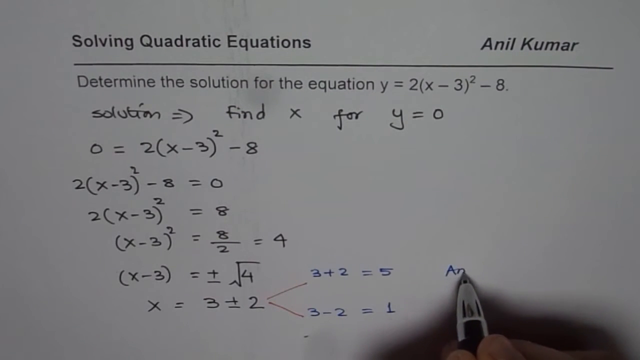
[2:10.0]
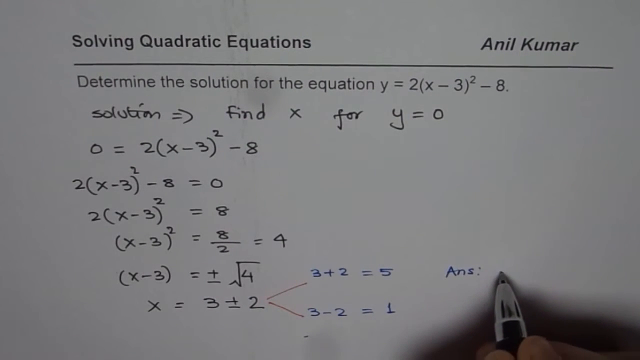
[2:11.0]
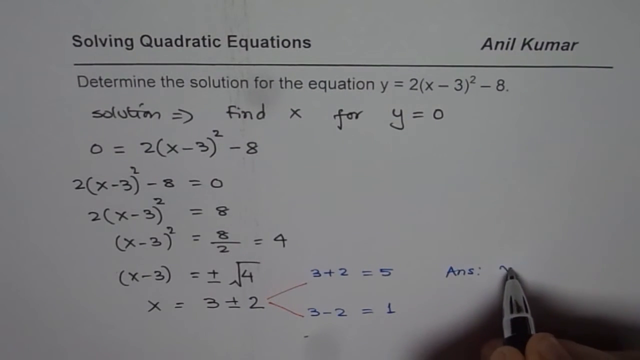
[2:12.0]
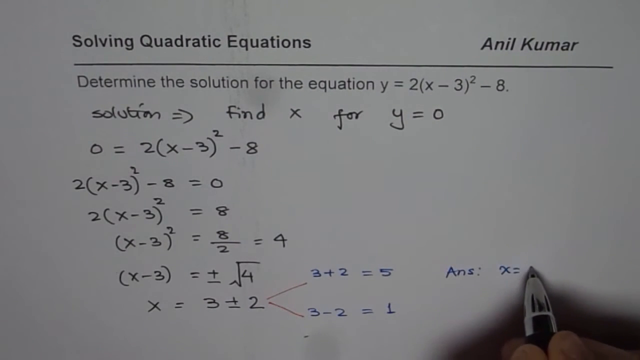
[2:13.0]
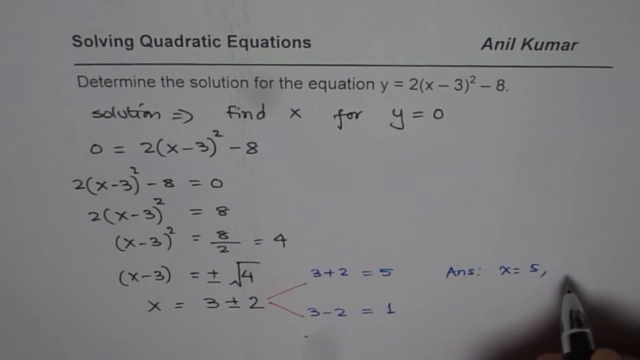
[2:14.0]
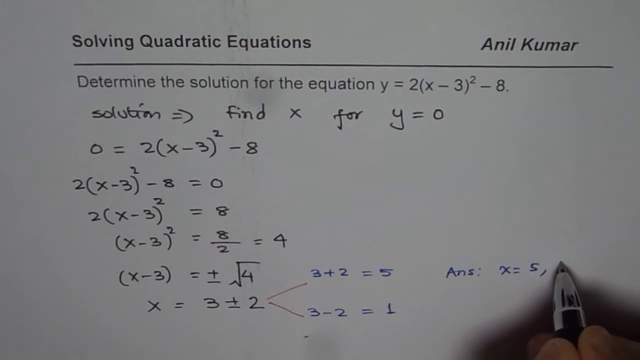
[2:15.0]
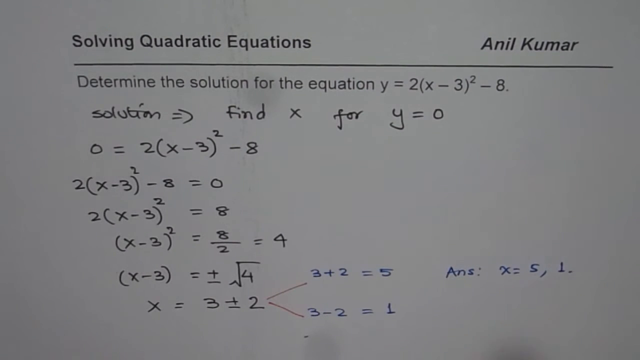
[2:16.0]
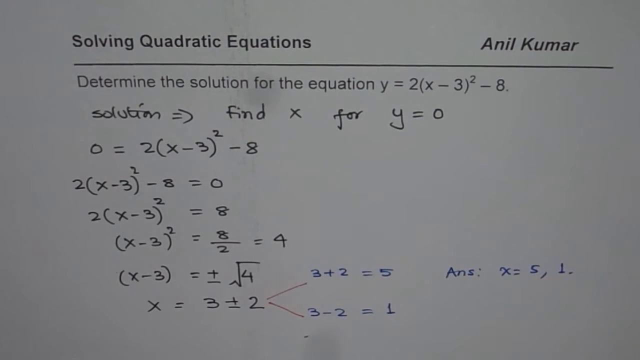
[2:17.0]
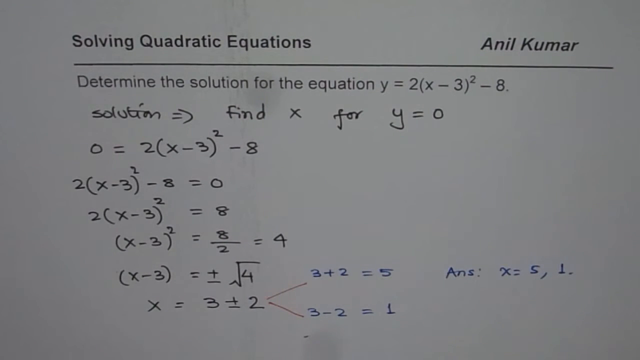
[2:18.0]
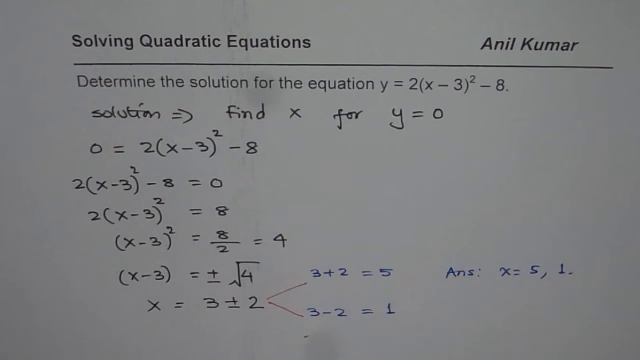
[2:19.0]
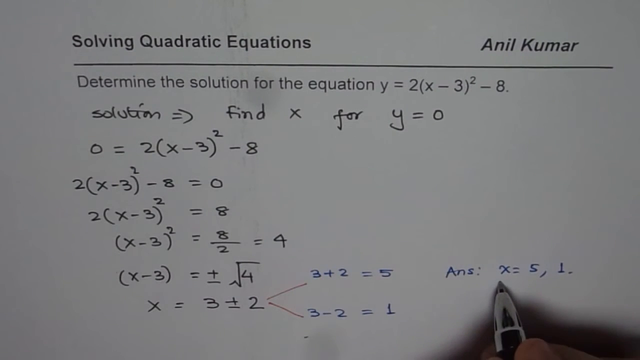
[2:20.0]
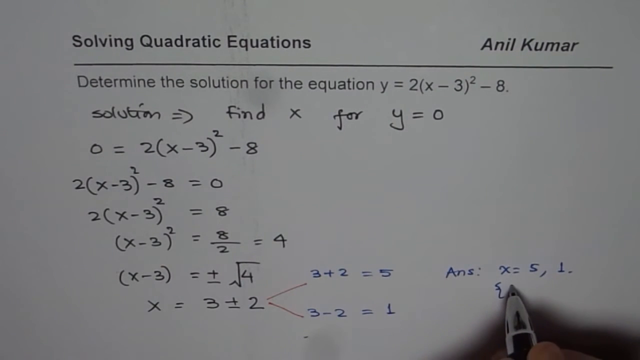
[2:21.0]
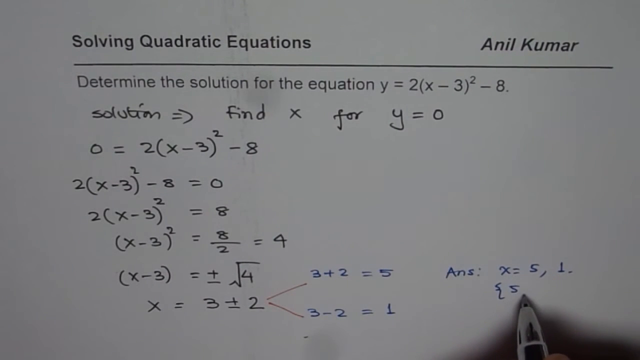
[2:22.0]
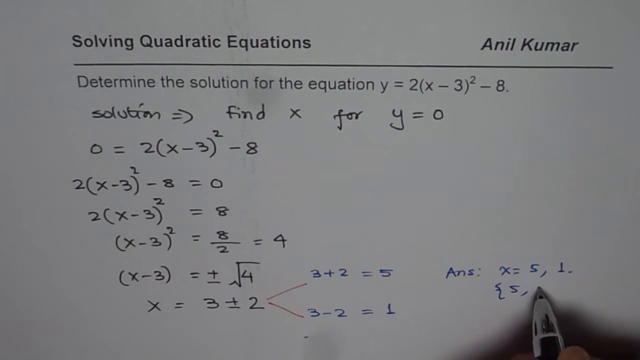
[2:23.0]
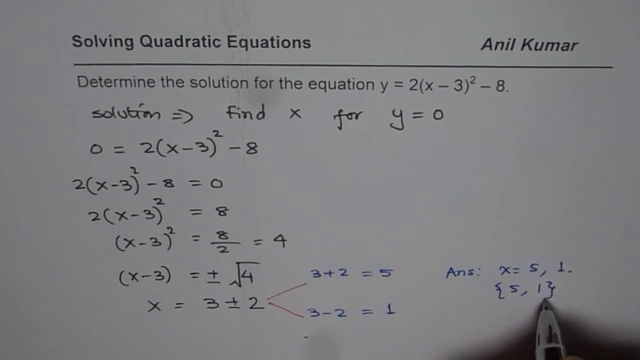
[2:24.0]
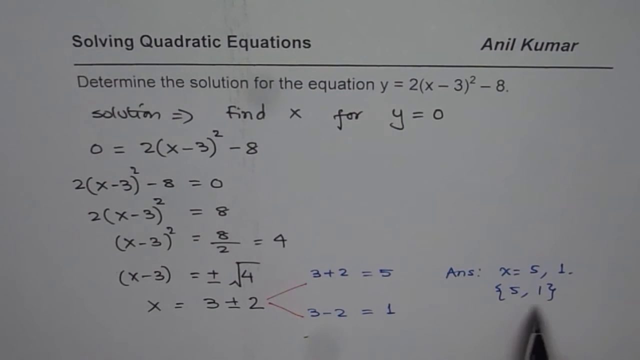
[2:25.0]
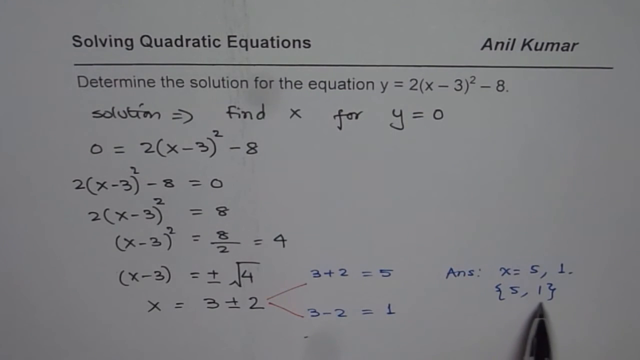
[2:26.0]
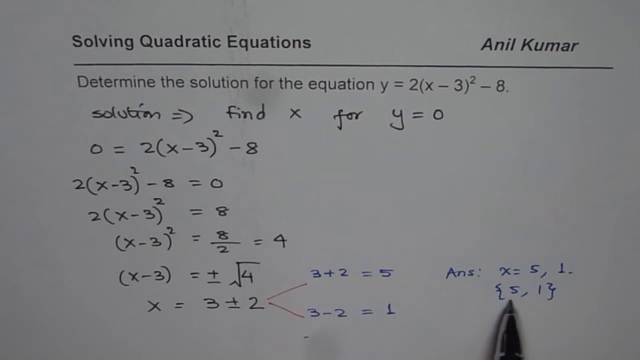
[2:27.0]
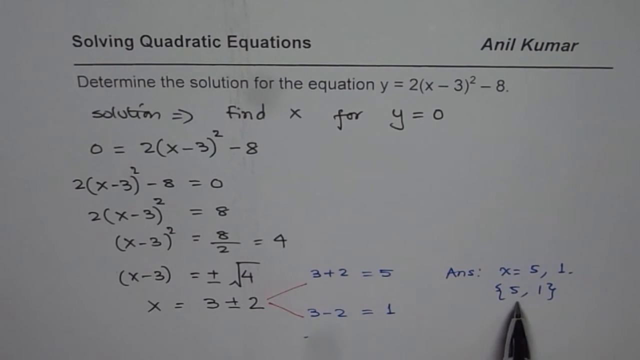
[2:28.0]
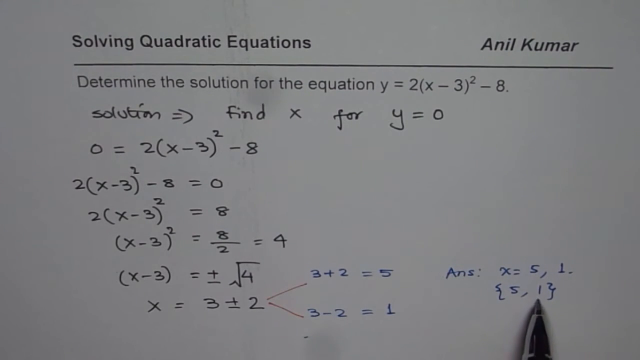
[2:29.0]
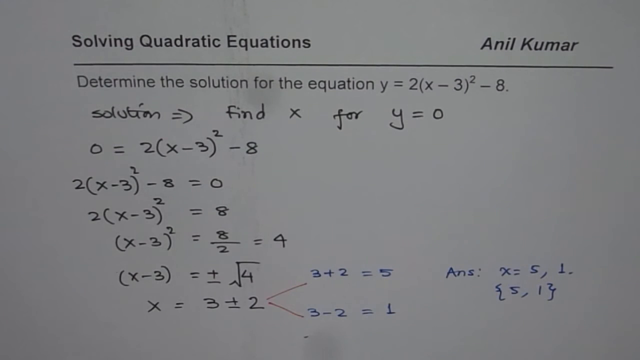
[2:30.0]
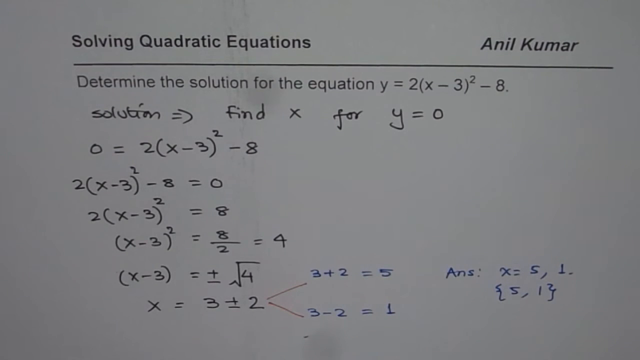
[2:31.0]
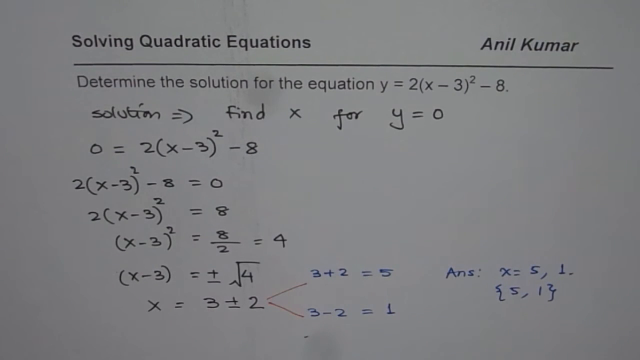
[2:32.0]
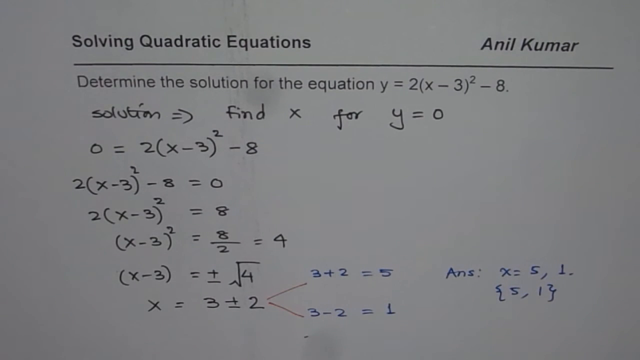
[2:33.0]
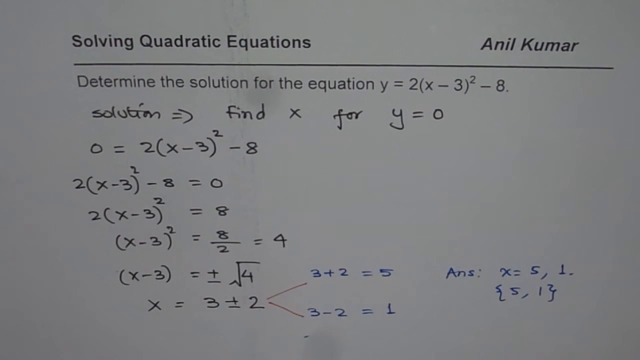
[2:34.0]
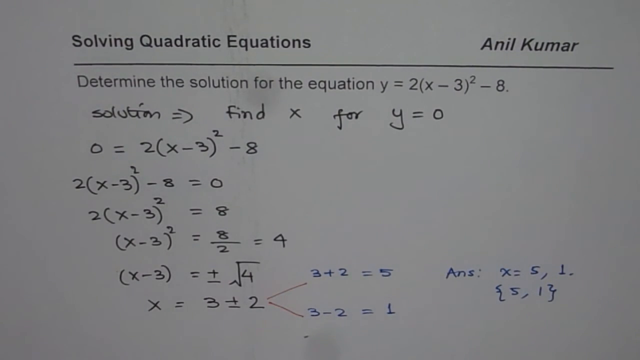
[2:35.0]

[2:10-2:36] Anil continues solving the equation "y = 2(x − 3)² − 8" on the white paper. He writes with a blue pen, goes back to black, then back to the blue pen. His hand wears a silver ring. The answer looks like "x = 5, 1", then "(5, 1)", and the equation appears to be finished, with writing in black, red and blue on the white paper.